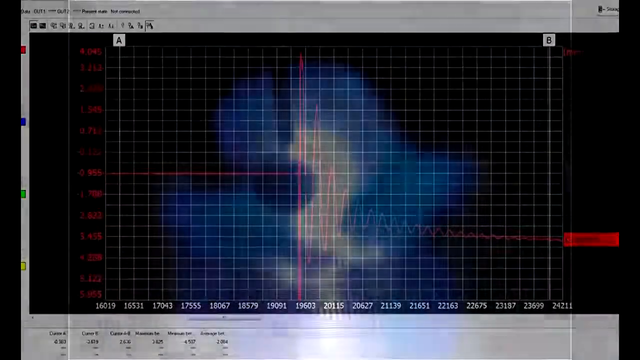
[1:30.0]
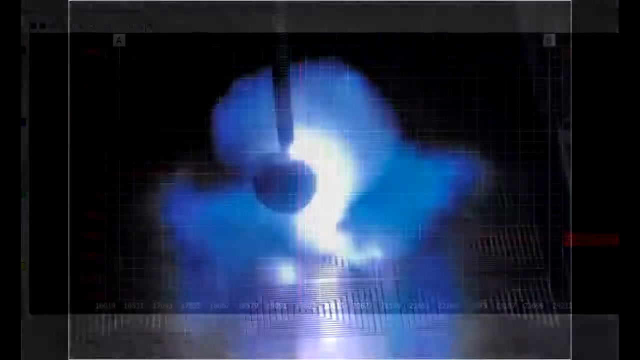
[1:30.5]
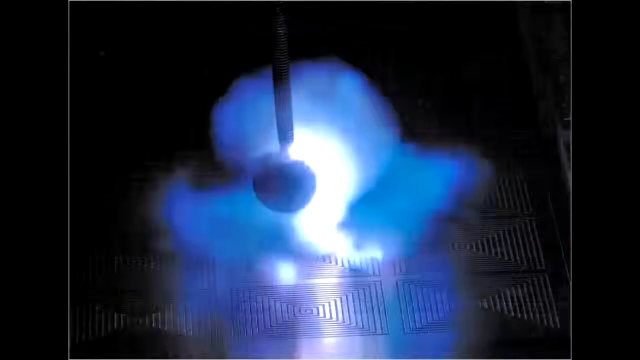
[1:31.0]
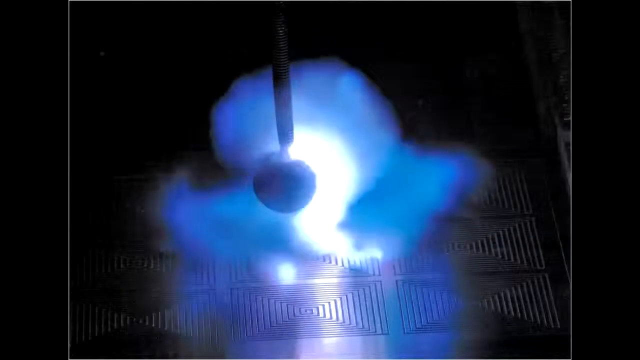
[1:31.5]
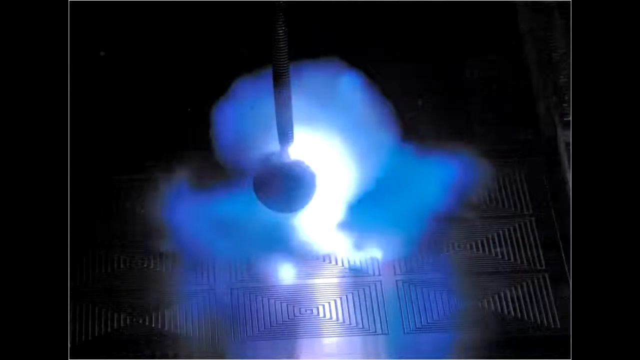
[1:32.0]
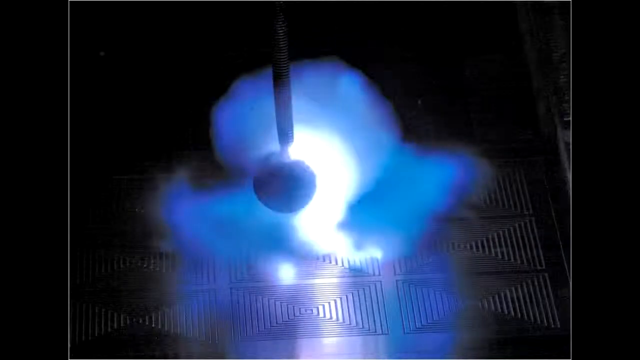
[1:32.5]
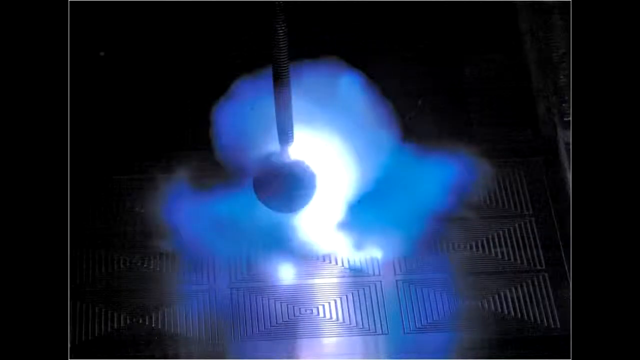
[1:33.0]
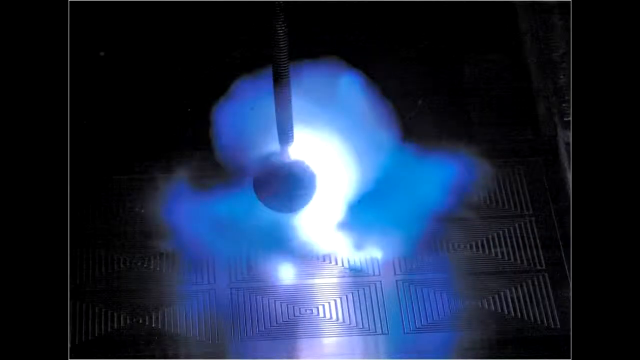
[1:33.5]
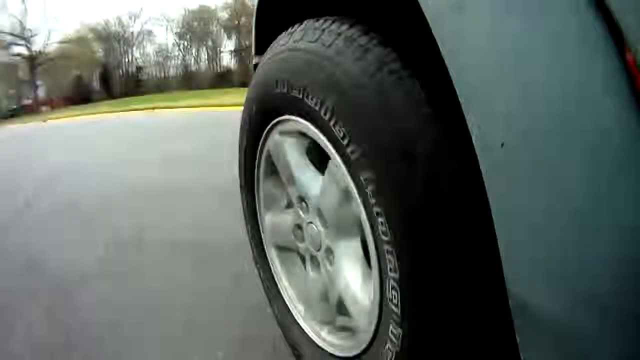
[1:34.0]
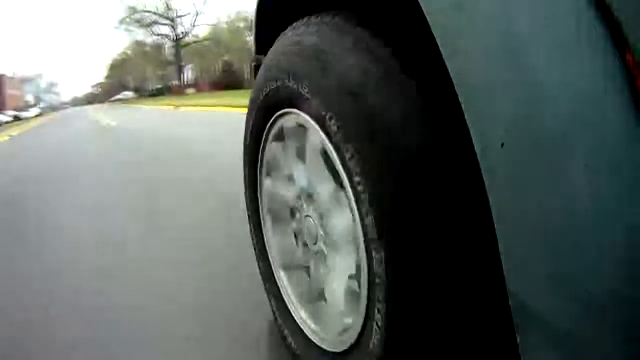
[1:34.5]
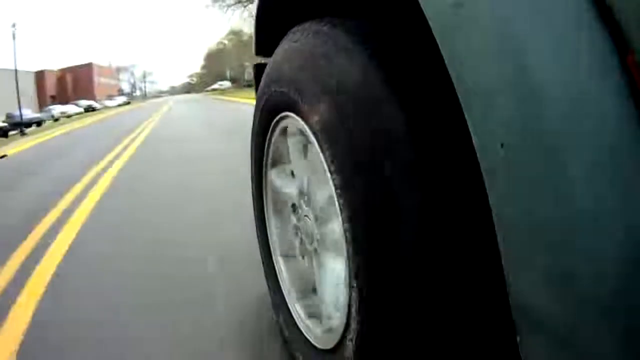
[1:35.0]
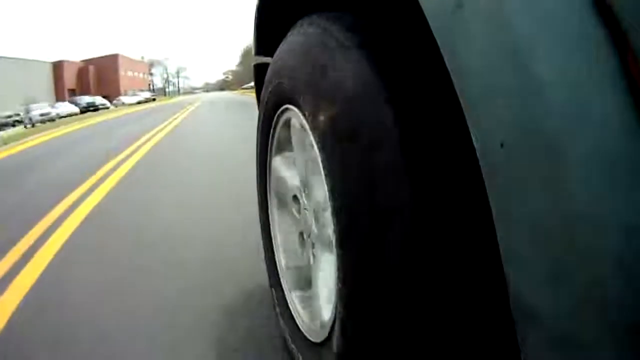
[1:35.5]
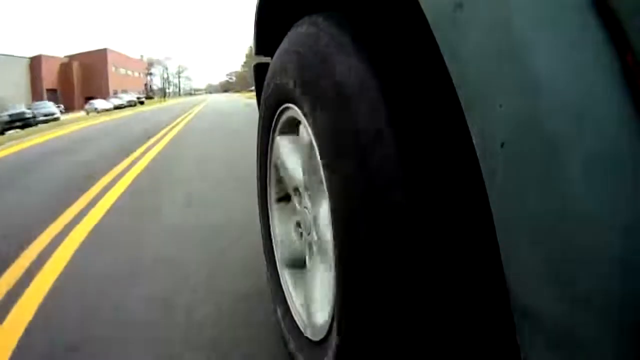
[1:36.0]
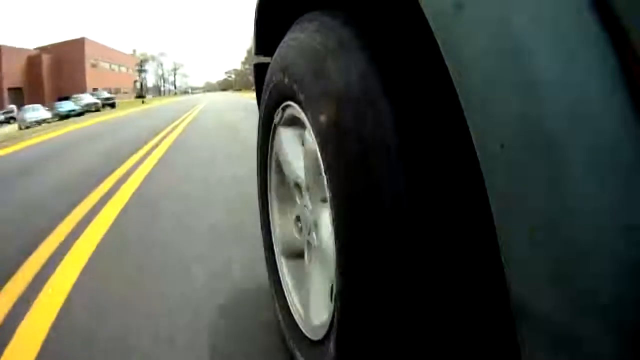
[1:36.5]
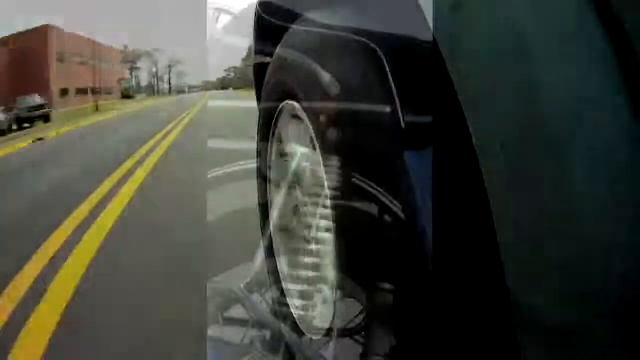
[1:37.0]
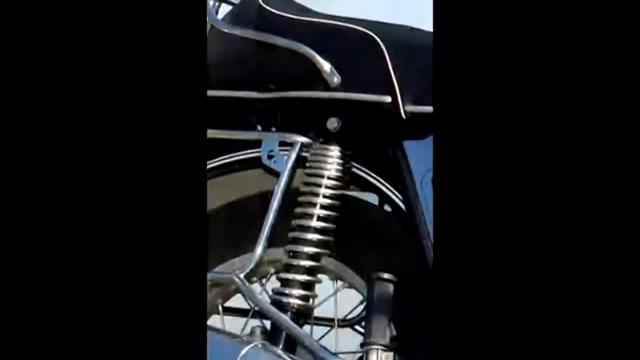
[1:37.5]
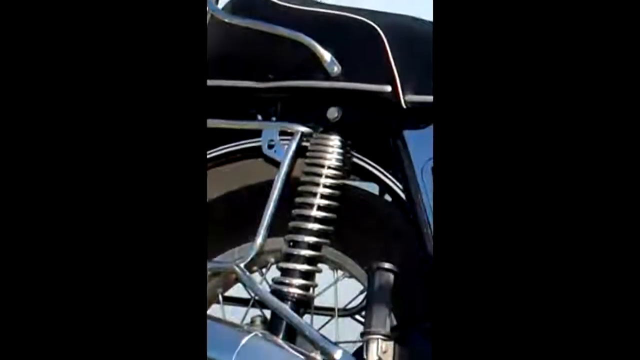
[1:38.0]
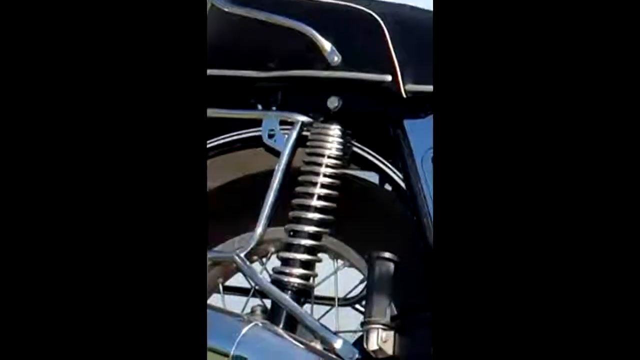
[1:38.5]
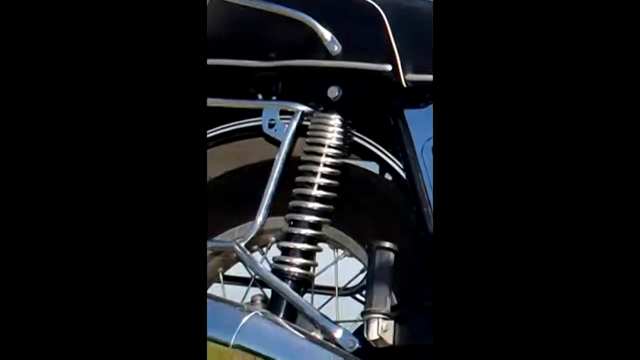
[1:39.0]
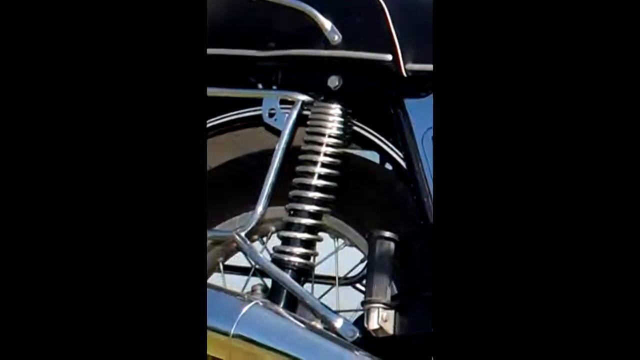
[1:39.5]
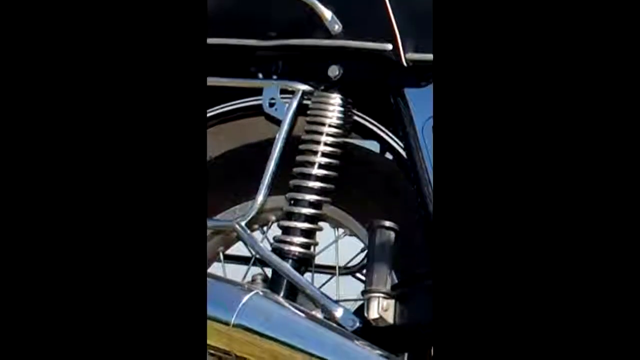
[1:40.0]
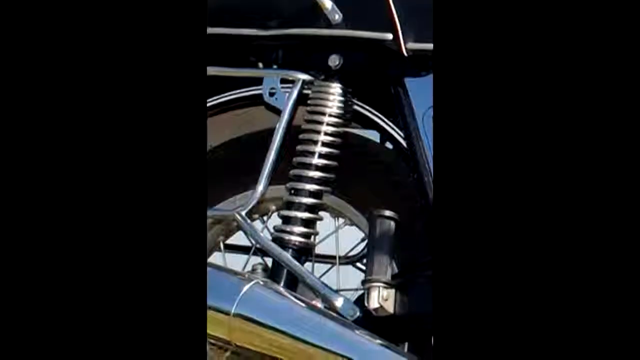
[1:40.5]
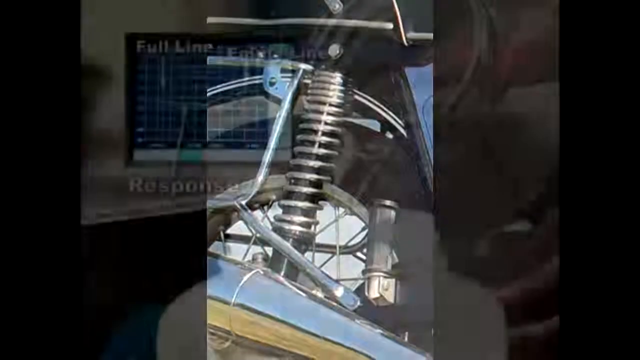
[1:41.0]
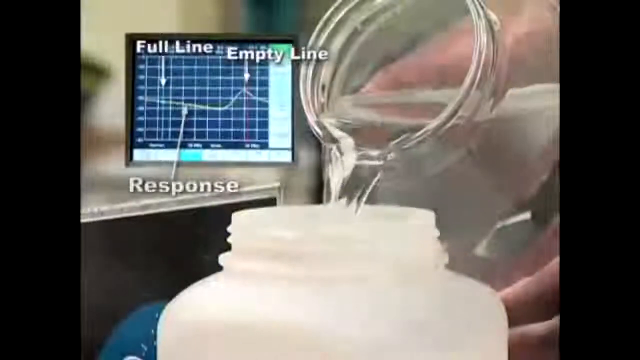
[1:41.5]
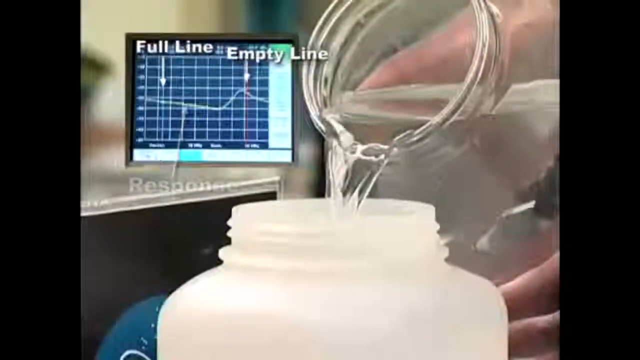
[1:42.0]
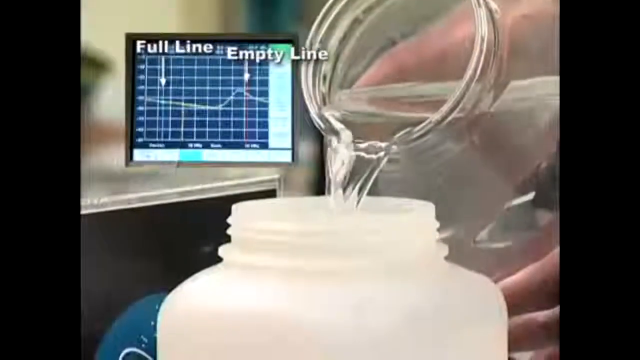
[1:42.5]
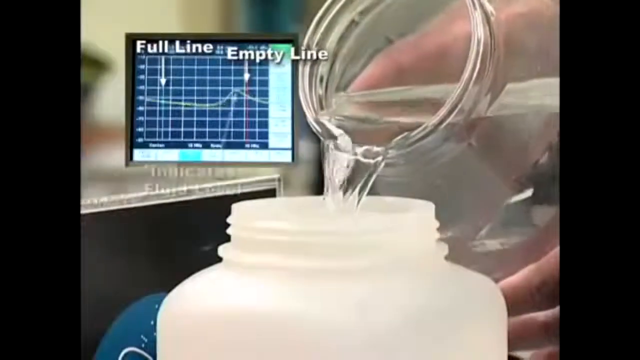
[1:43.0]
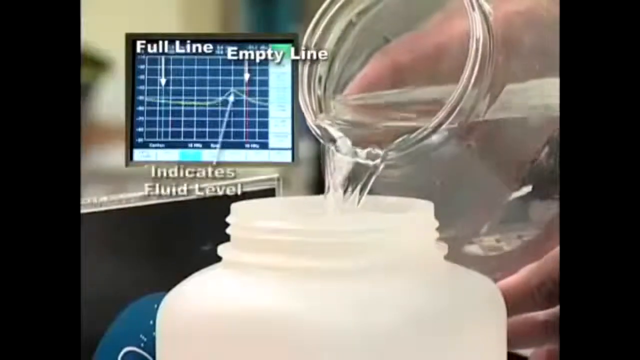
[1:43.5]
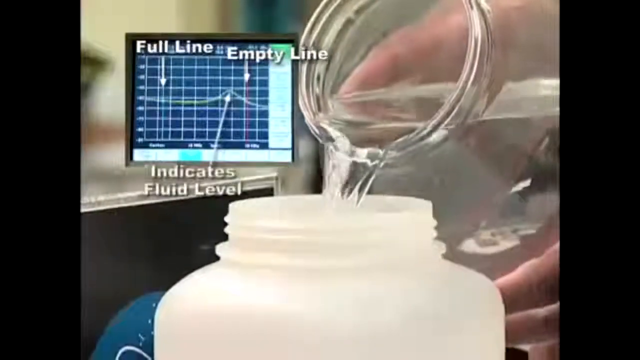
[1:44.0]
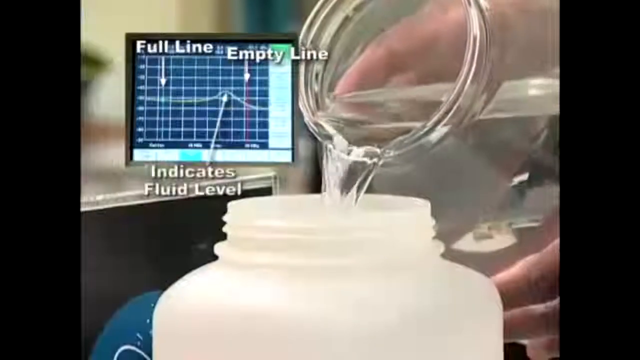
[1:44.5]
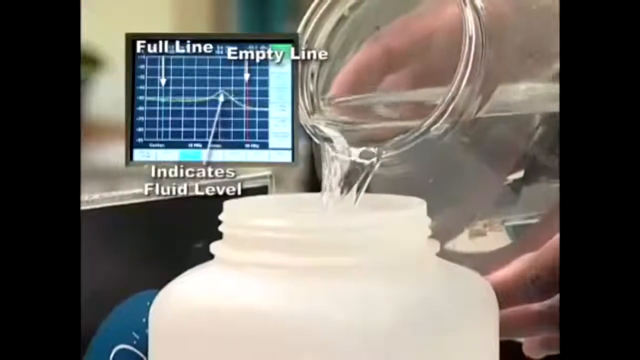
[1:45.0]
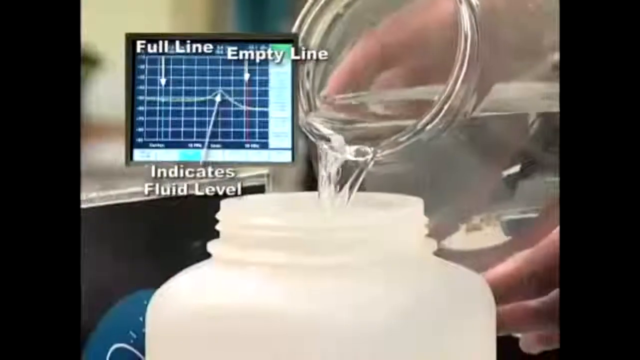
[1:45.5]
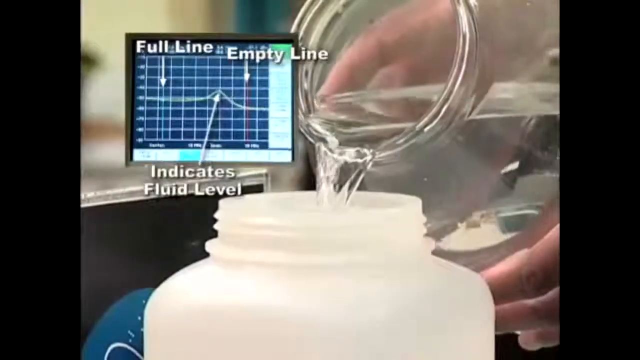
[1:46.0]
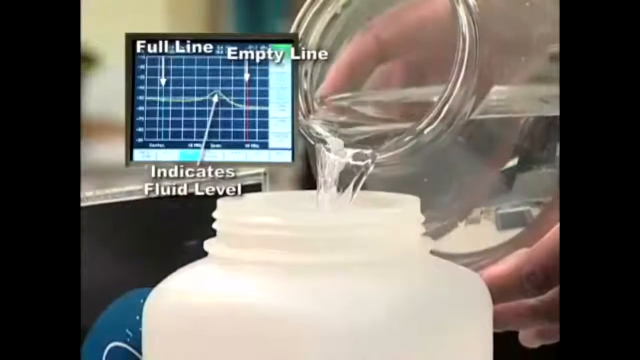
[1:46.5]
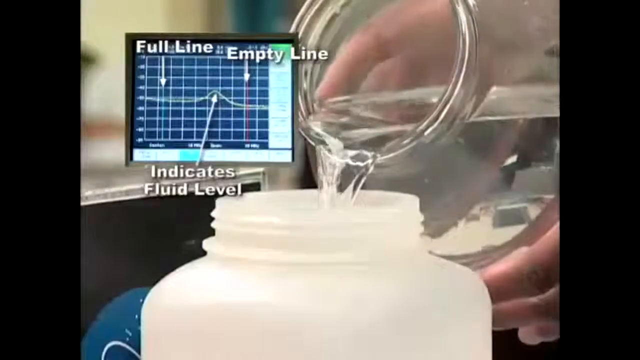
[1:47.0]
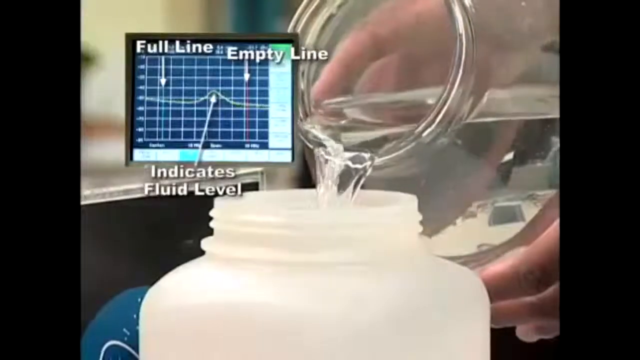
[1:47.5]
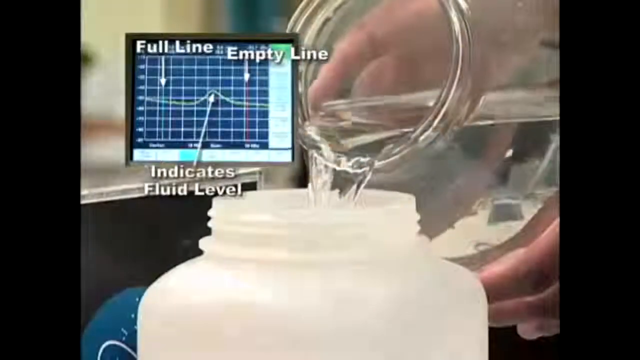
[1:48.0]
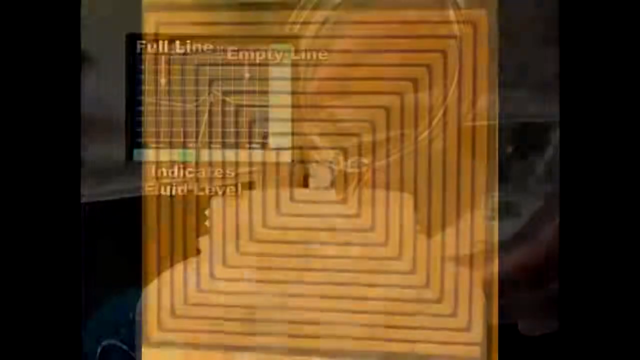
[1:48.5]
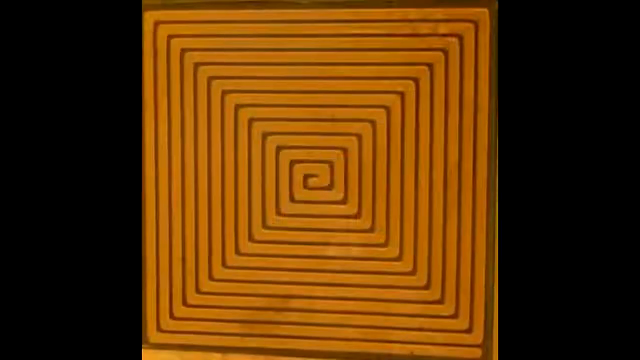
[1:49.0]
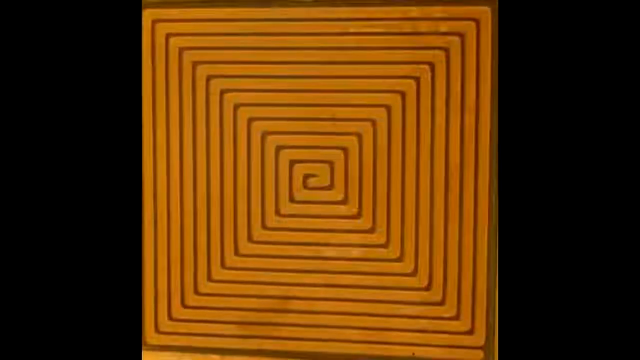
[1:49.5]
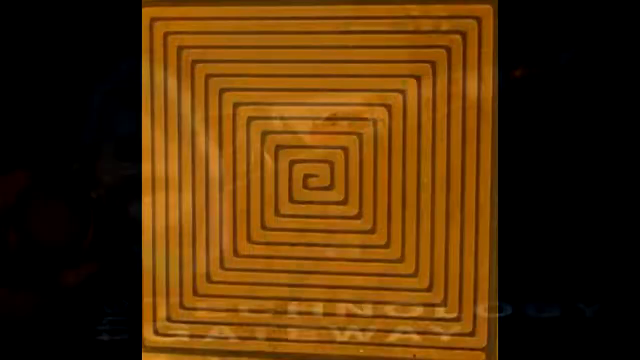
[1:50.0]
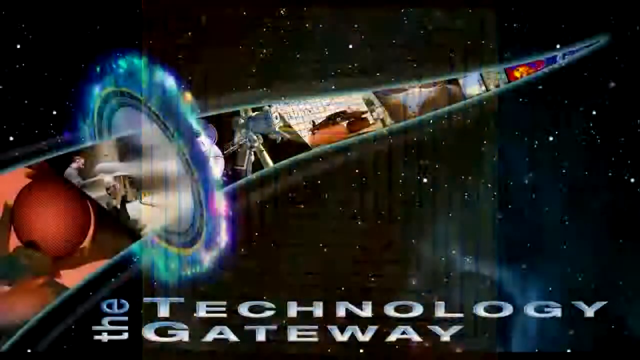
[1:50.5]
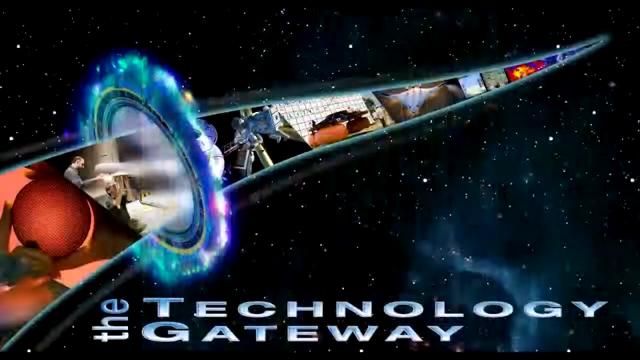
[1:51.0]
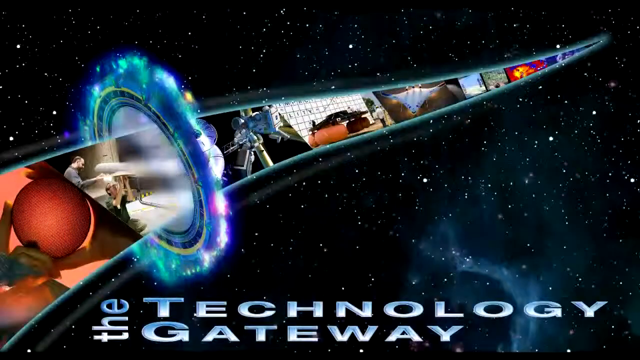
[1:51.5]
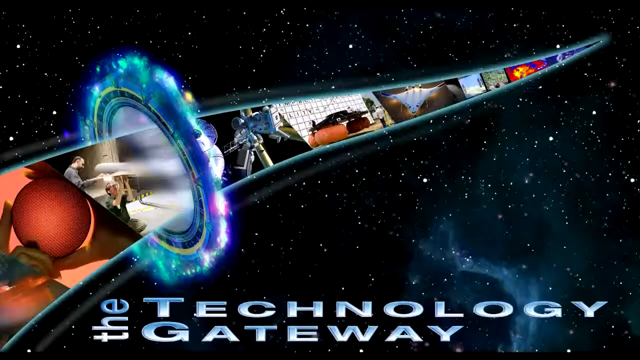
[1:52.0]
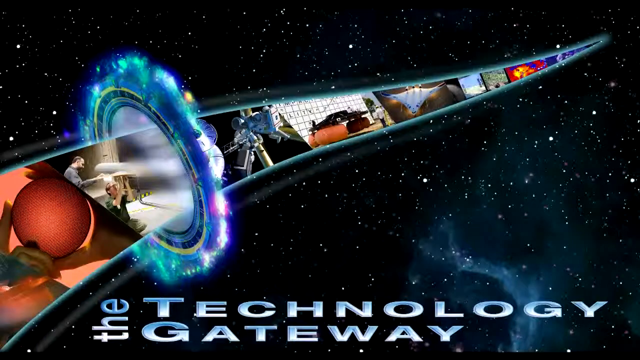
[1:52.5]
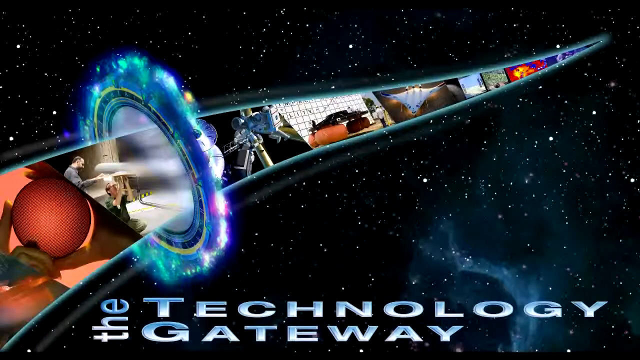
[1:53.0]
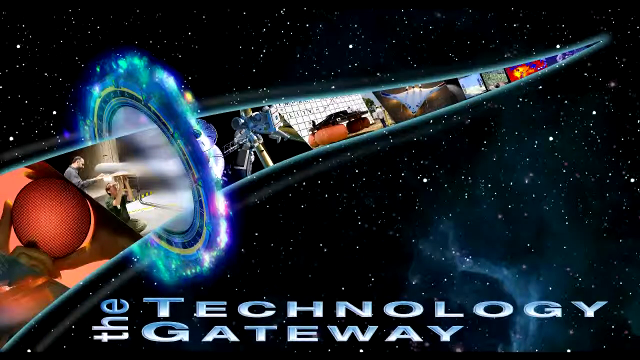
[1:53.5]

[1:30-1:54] The video comes back to the coil from the beginning, except it now looks like a coiled plate. Another coil appears to be in use, and fluid seems to be measured. What looks like a plotted graph appears, part of it seeming to be plotted; it looks similar to sonar, like something being detected and picked up on a frequency. It has colors with movement and separation and distinction between the colors.